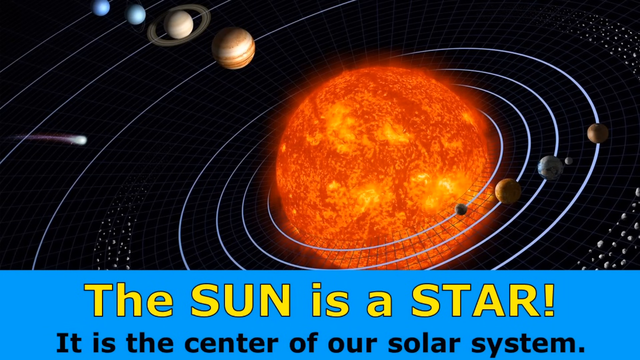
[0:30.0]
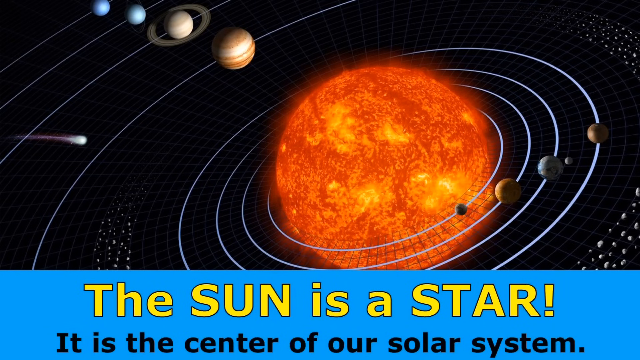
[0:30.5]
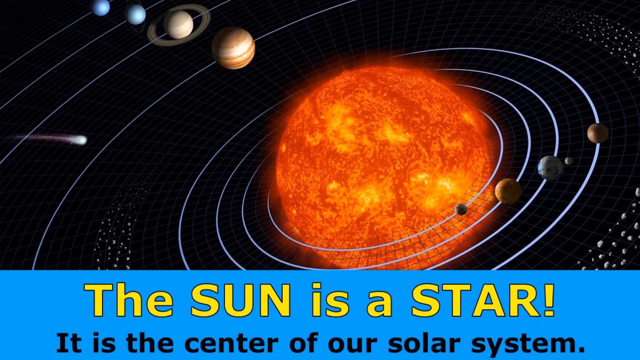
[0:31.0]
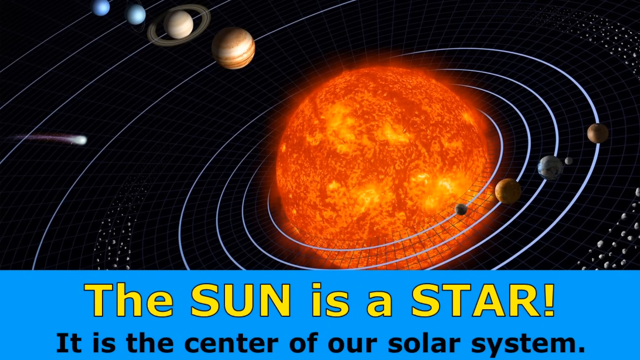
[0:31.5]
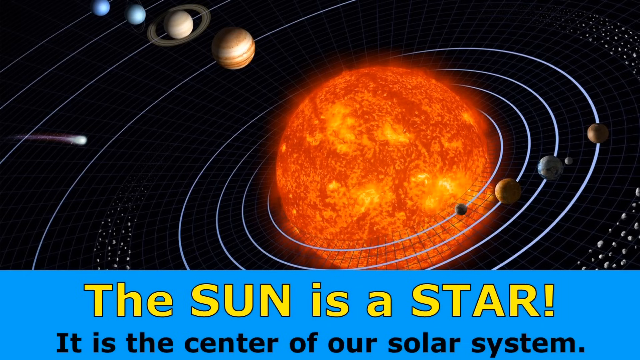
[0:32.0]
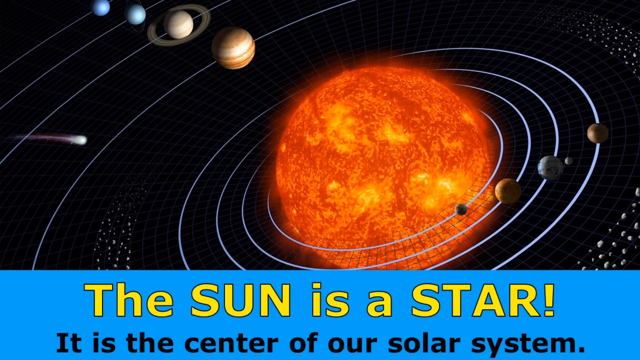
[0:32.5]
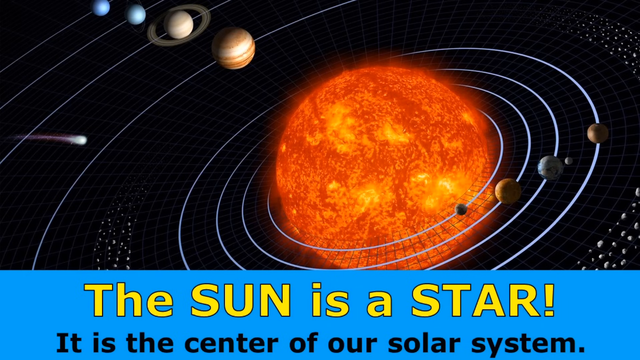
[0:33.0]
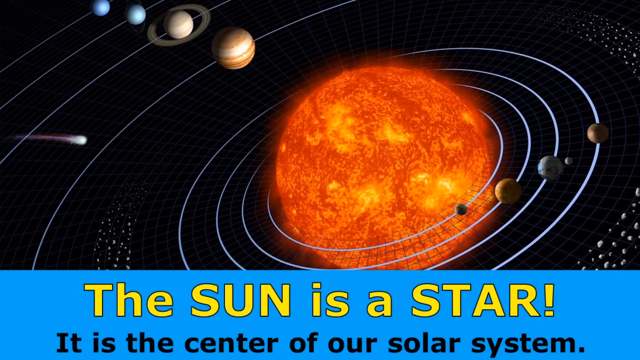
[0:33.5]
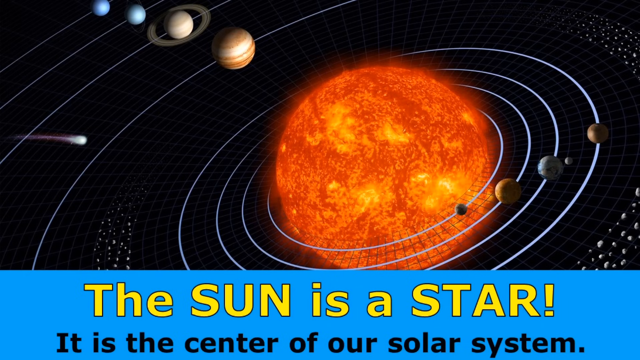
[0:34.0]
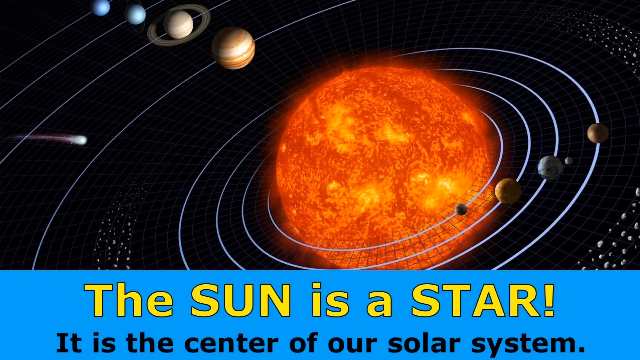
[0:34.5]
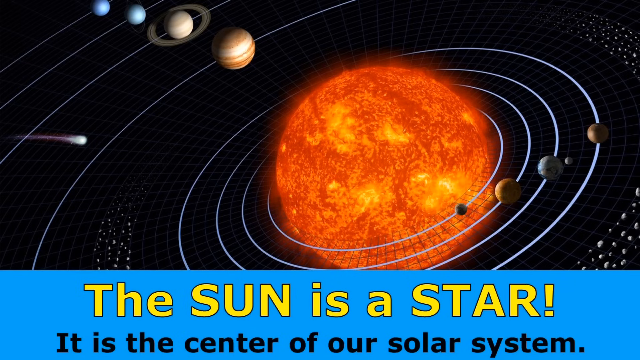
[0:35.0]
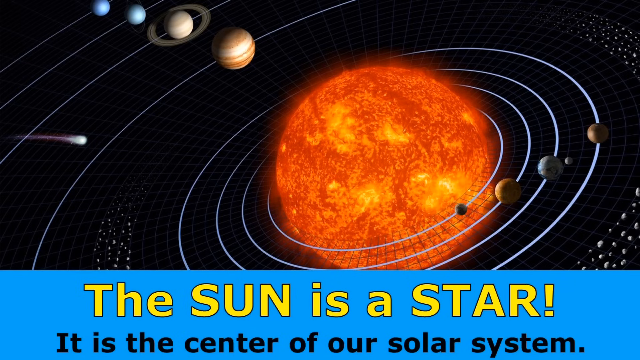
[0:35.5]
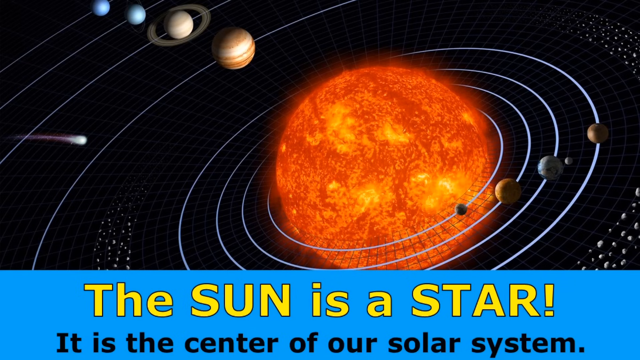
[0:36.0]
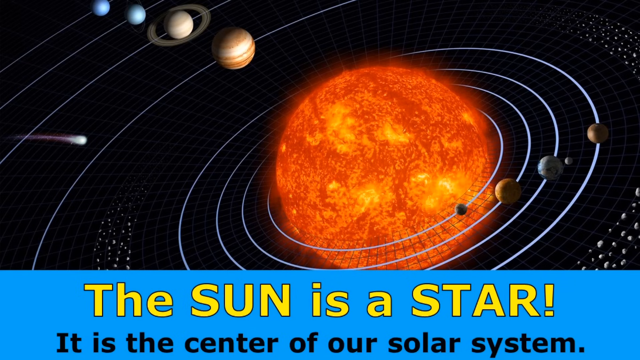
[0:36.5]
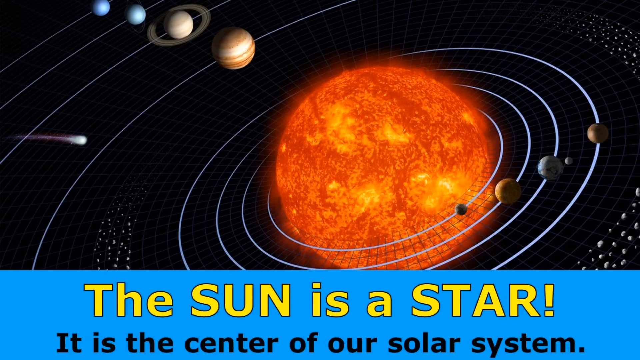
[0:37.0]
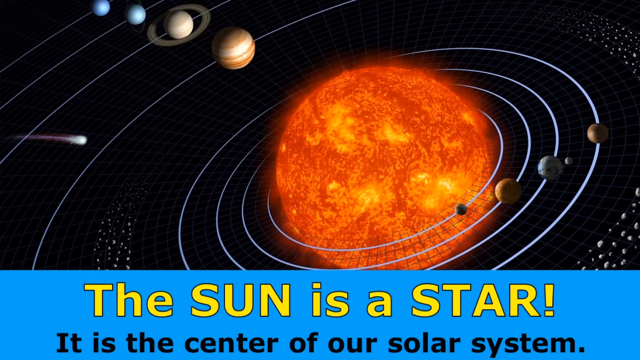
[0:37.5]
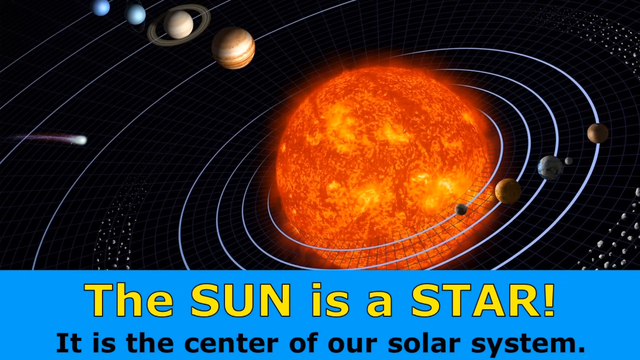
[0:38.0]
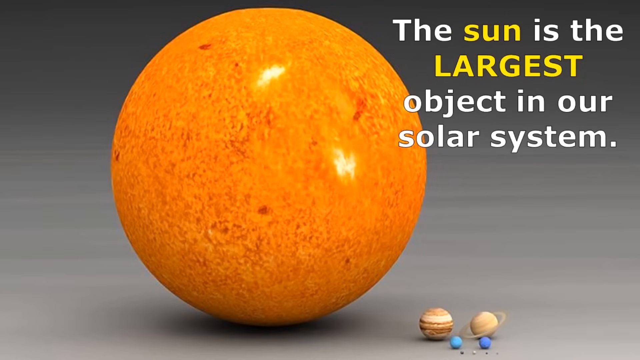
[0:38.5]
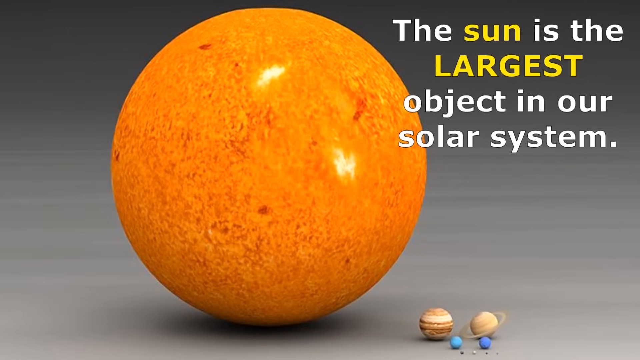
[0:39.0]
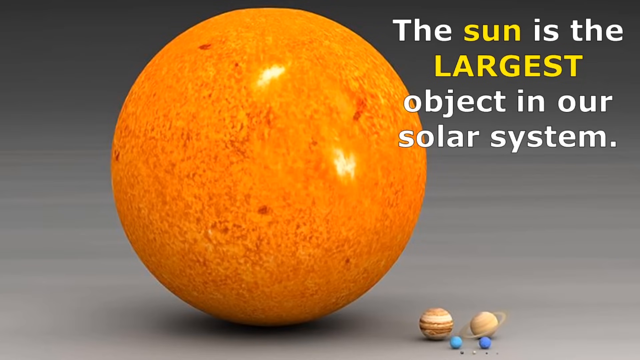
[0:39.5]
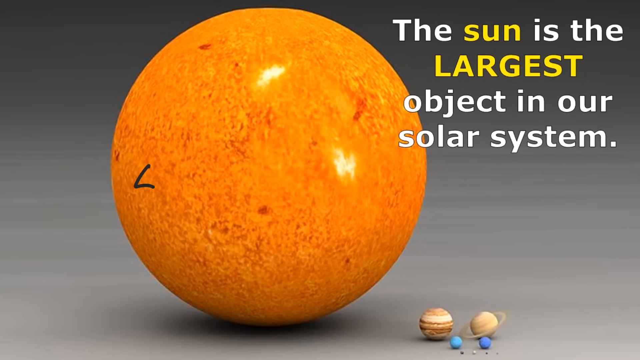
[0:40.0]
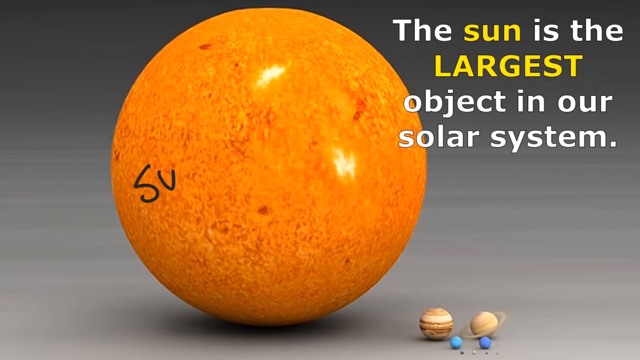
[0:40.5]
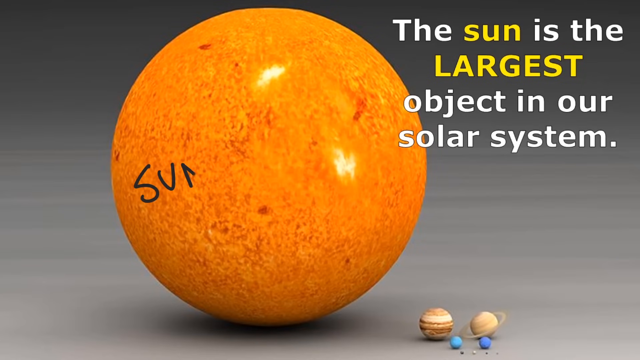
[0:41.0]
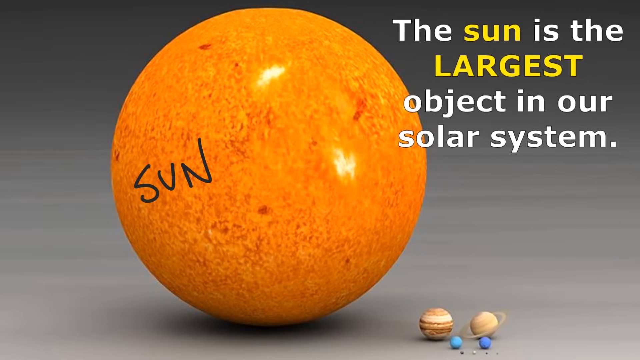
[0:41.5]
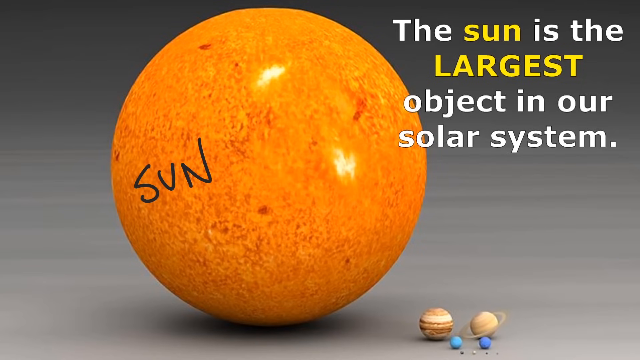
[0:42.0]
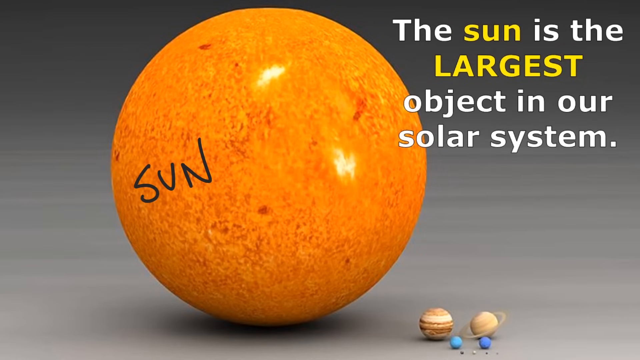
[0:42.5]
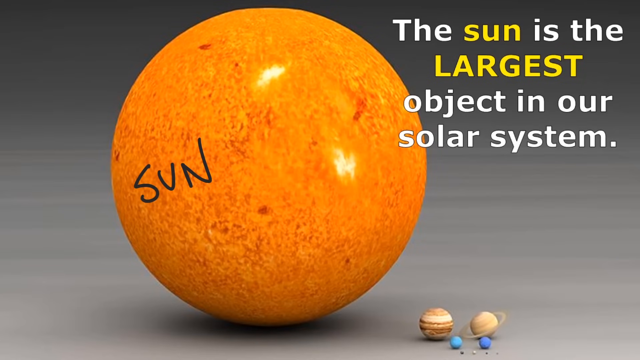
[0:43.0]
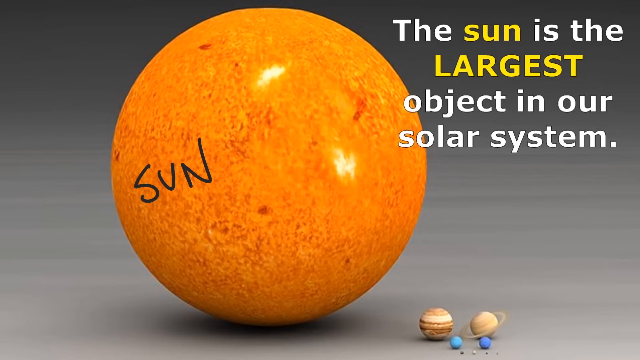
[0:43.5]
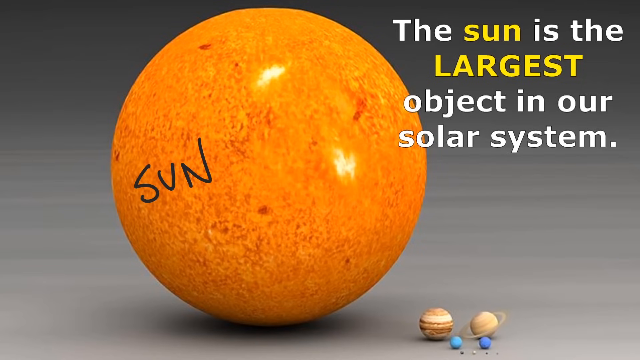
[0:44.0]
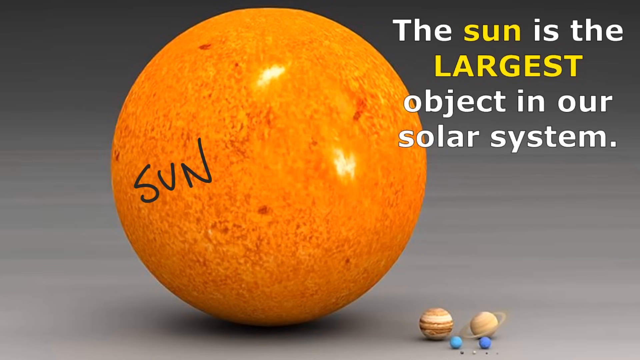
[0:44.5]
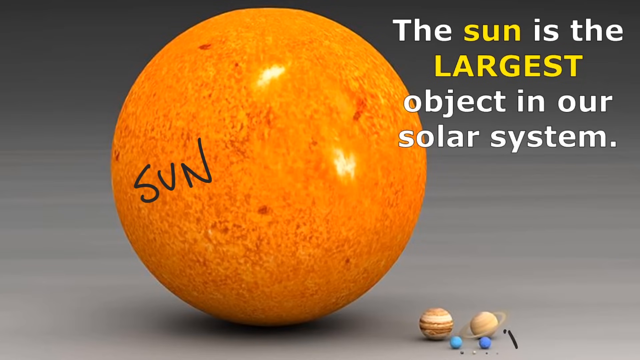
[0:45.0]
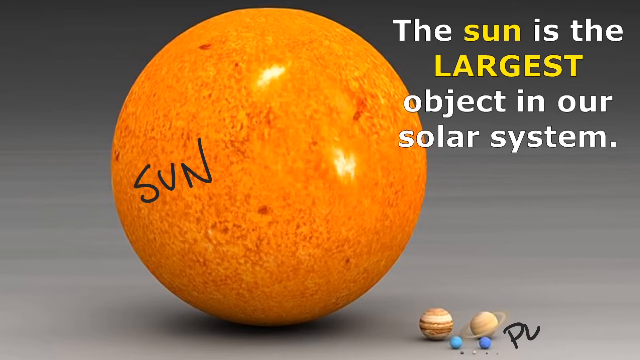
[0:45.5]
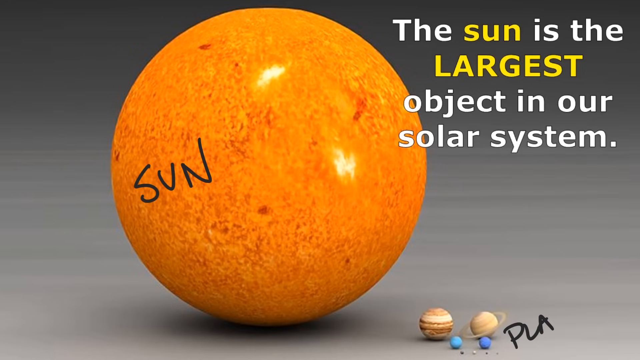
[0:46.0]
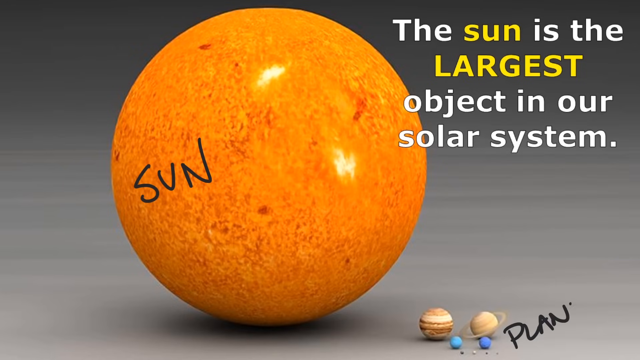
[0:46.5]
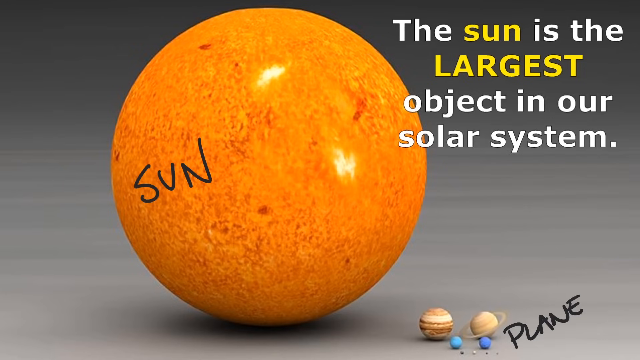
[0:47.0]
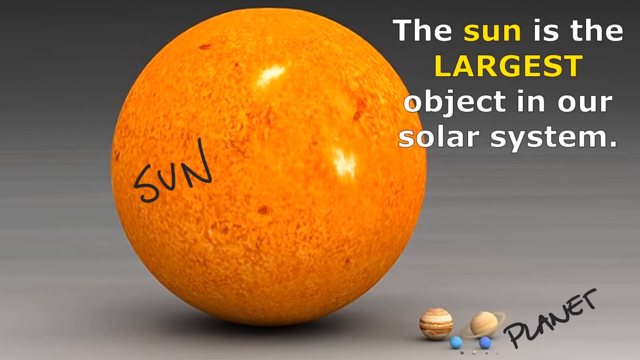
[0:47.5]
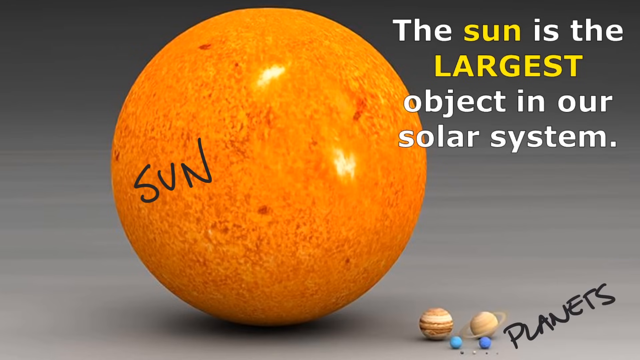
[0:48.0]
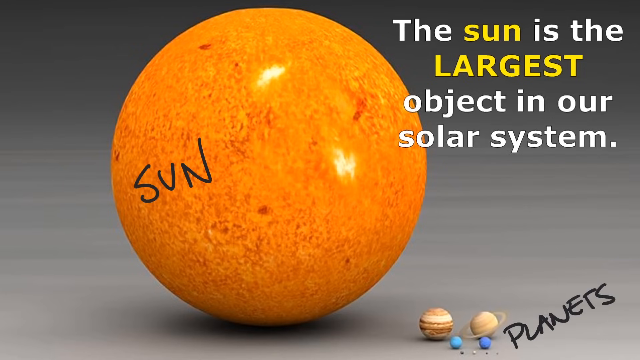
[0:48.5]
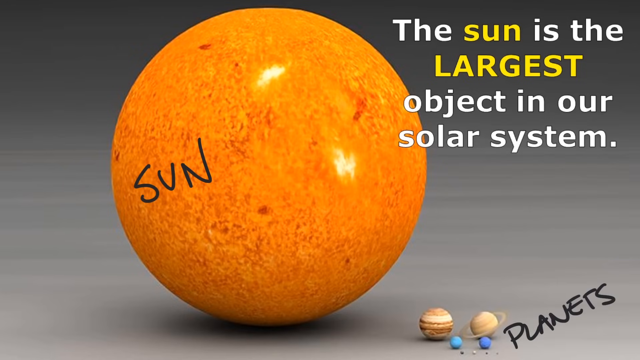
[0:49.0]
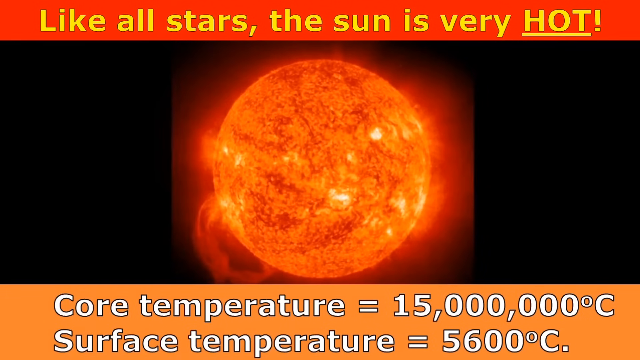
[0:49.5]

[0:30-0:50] The title screen reading "the SUN is a star" continues, with the word "Sun" in all capitals. A screen shows the solar system with the planets around the sun, including Jupiter, Saturn and the other planets farther from the sun; it is a static screen, not an animation. Next comes a picture of just the sun: a model of the sun standing up or sitting on top of some sort of gray surface. At the top right, text reads "the Sun is the largest object in our solar system."